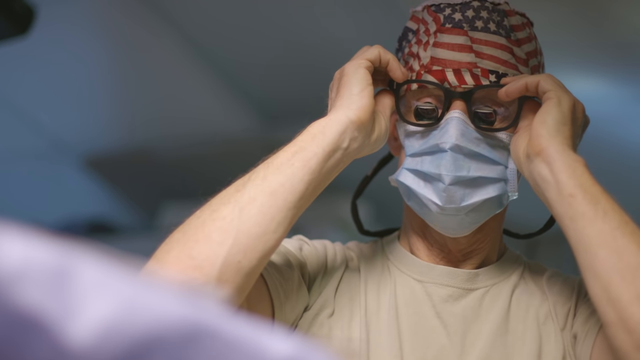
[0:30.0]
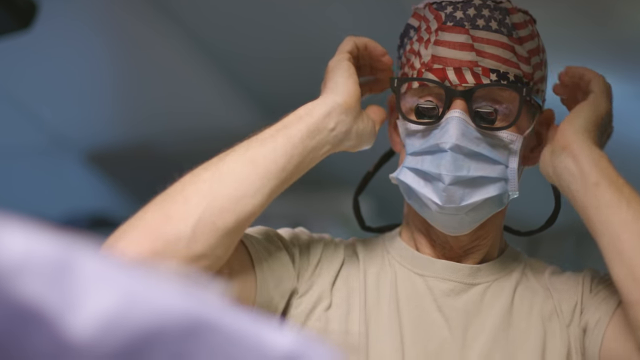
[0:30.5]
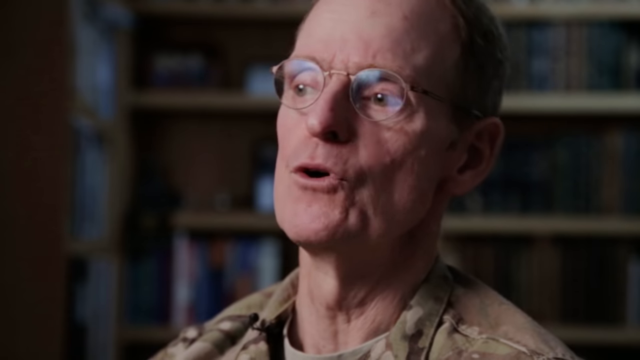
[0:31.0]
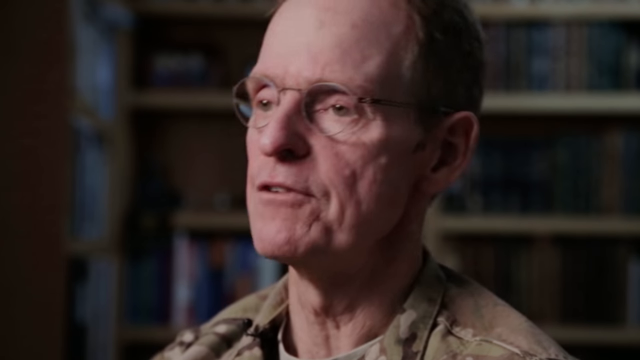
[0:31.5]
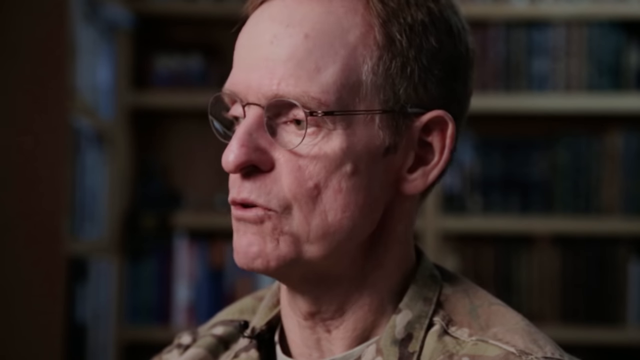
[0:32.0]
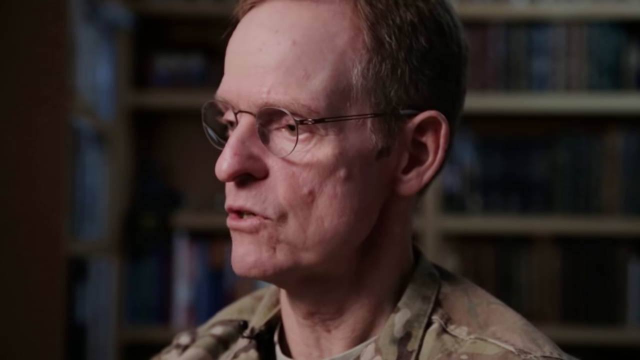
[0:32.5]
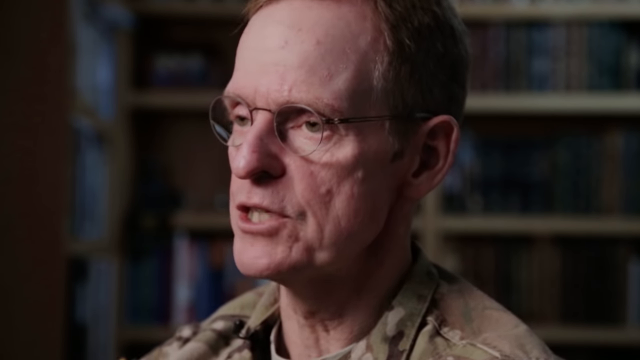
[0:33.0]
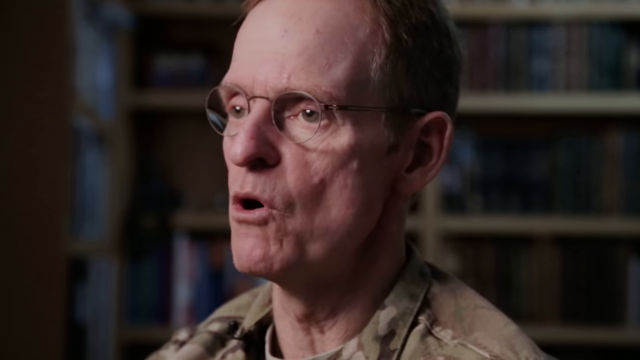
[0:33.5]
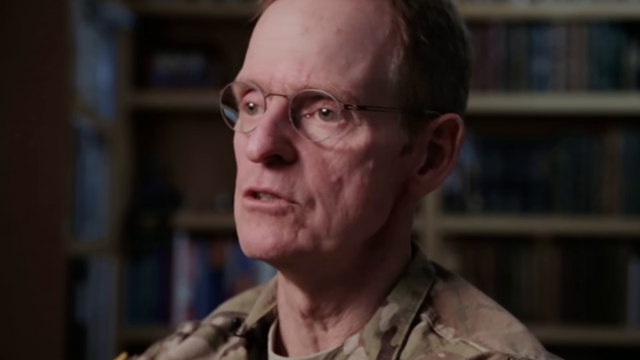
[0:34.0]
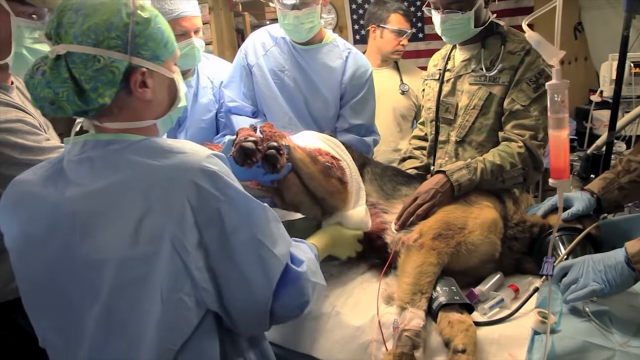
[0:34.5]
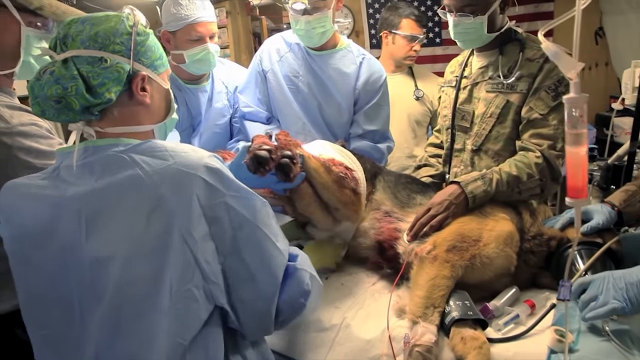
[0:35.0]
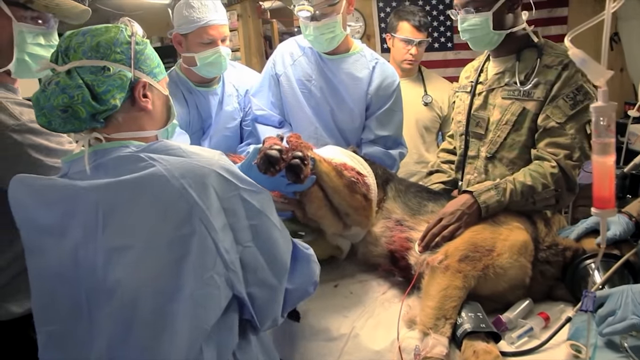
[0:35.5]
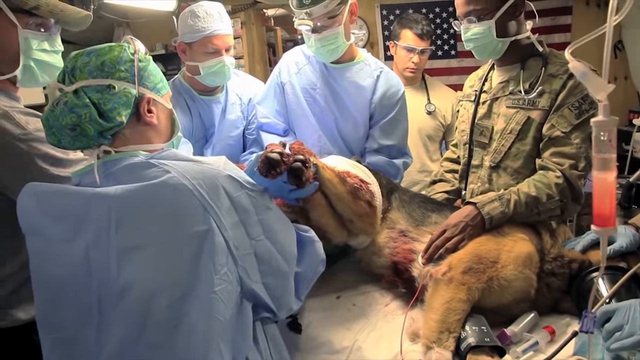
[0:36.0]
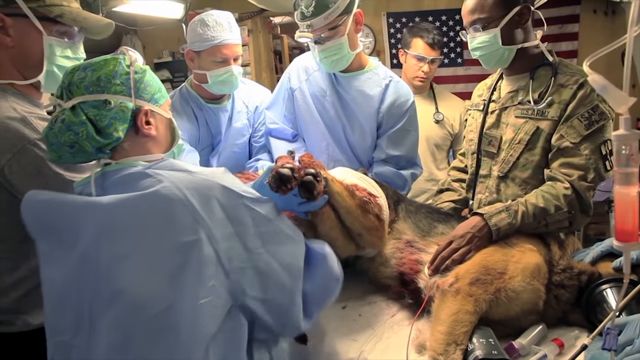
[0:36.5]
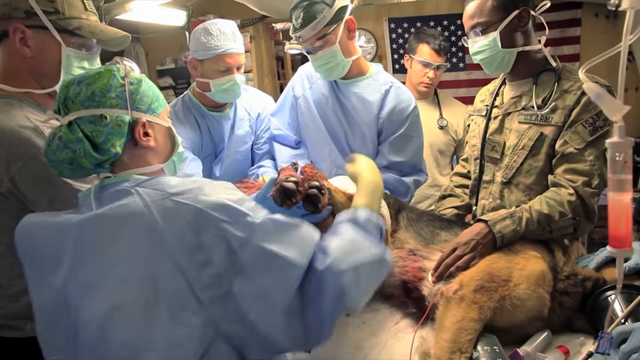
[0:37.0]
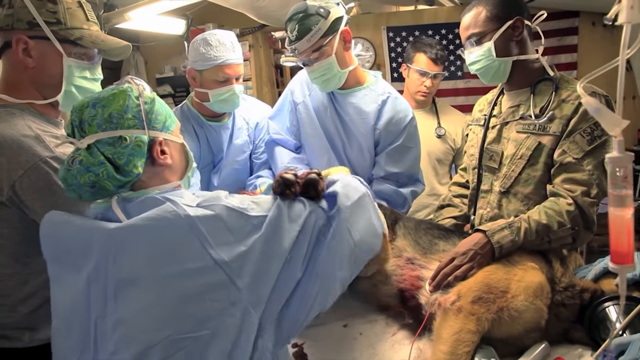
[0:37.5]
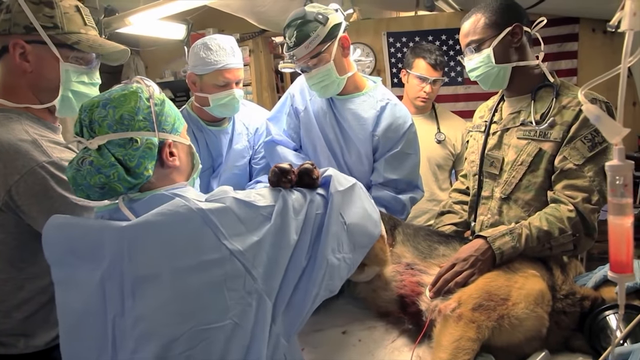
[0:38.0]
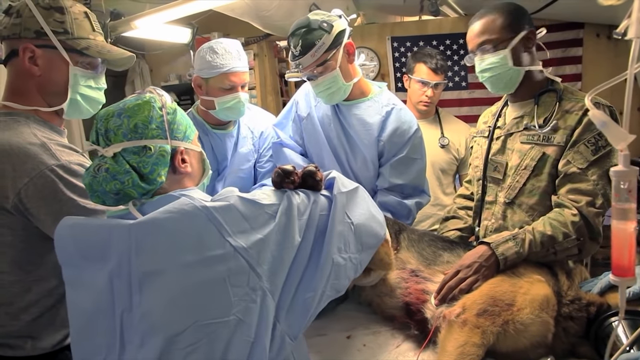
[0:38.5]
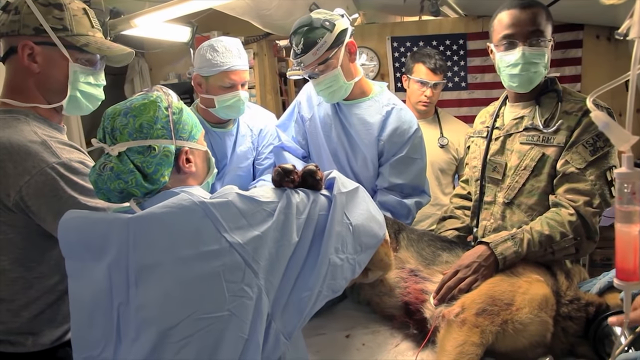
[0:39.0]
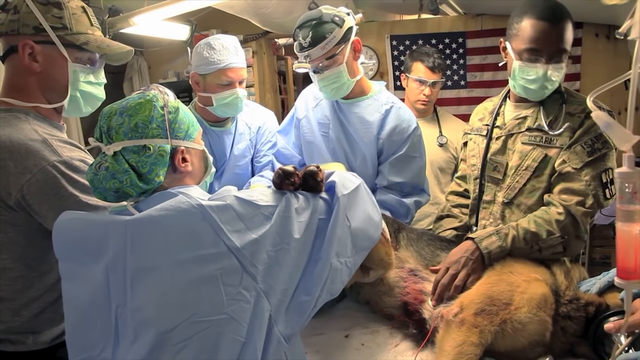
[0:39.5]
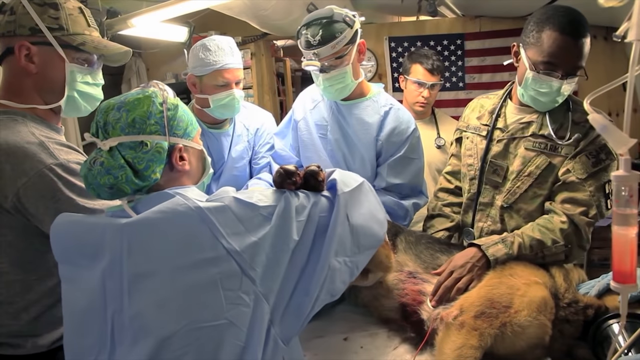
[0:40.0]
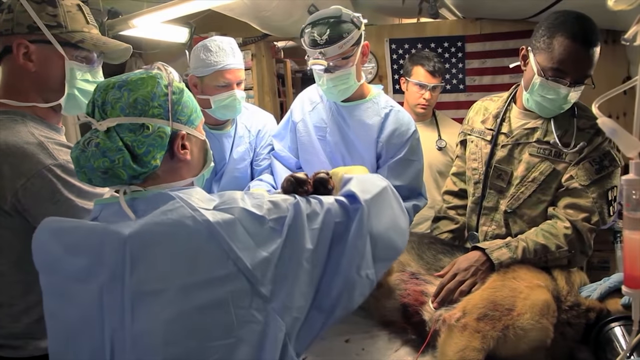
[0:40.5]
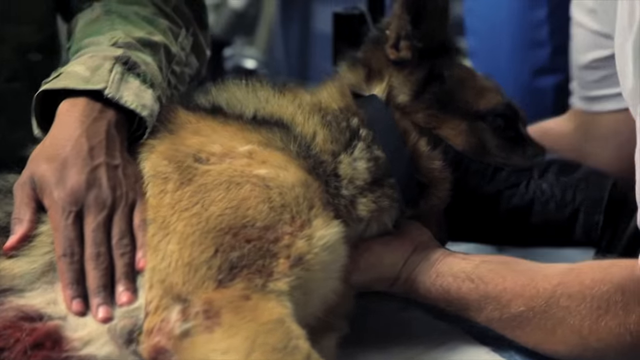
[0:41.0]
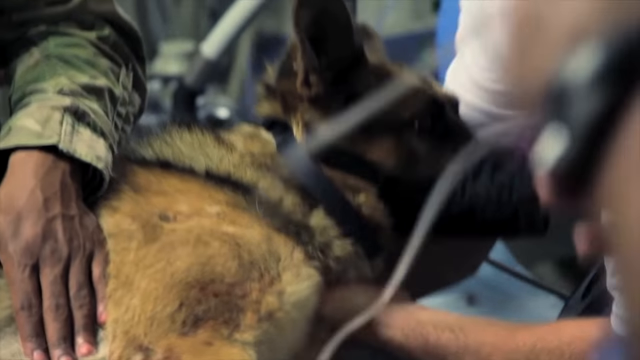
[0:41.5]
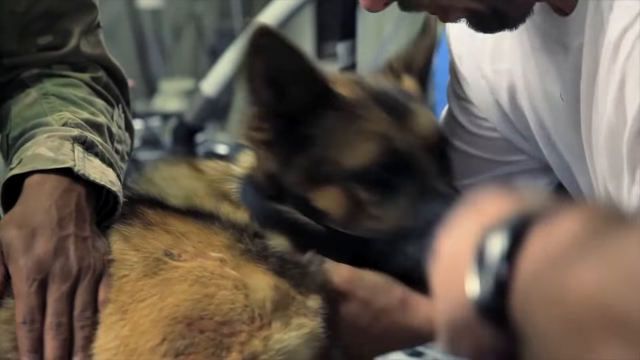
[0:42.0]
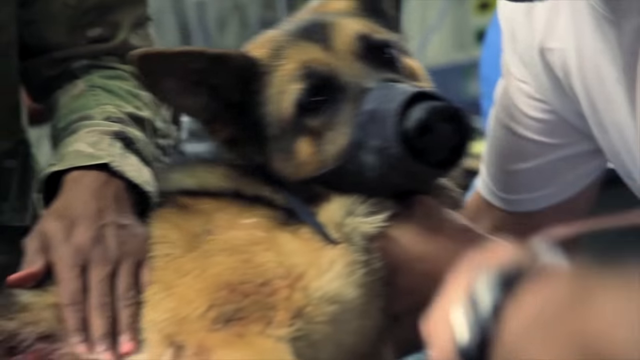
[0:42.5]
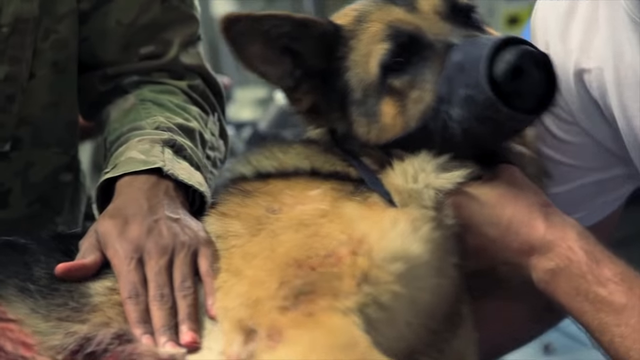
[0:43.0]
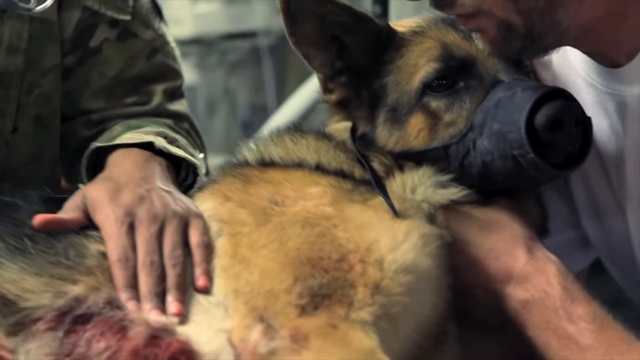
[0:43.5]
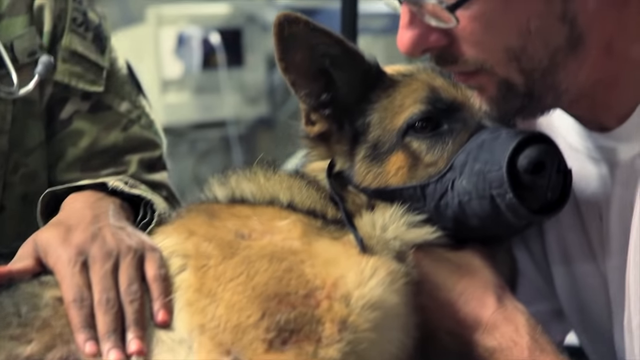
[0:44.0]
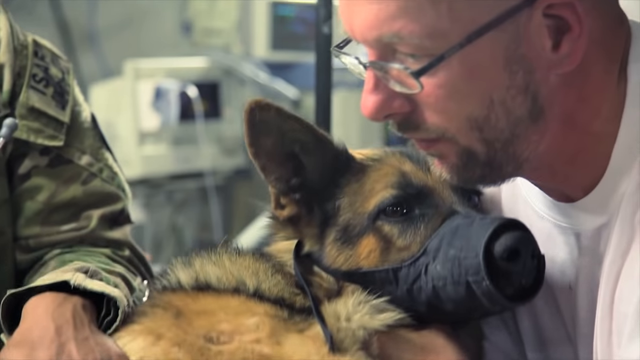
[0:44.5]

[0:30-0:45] An army medic puts on glasses, and the video cuts to a hurt German Shepherd in a muzzle being prepped for surgery. It is apparently a military working dog that has been hurt on assignment, and the people are trying to repair its injury. The German Shepherd is bloody and is being wrapped up.